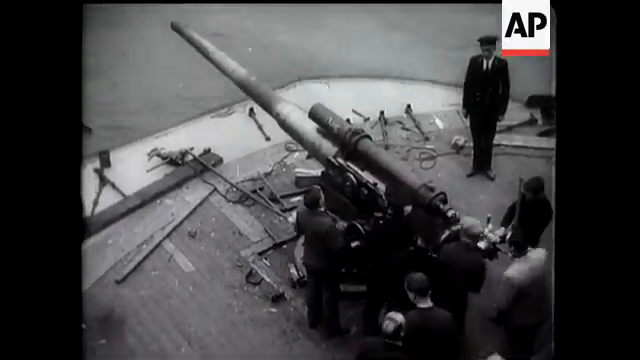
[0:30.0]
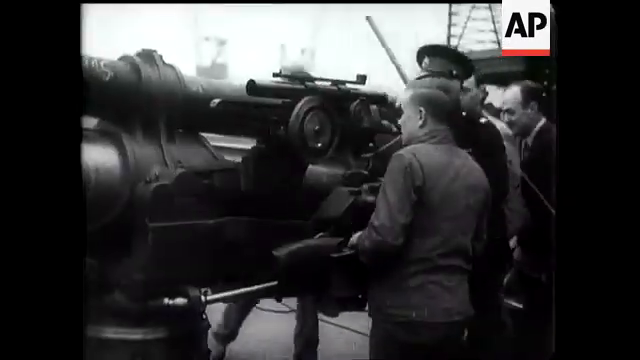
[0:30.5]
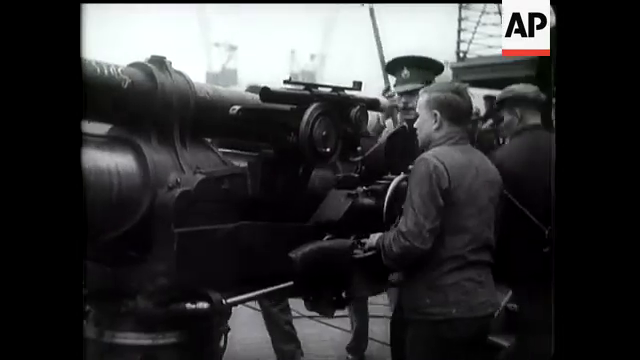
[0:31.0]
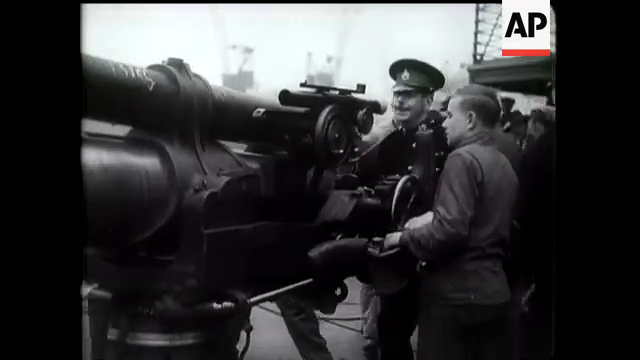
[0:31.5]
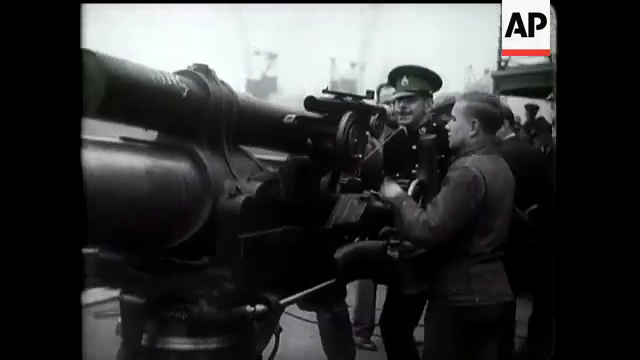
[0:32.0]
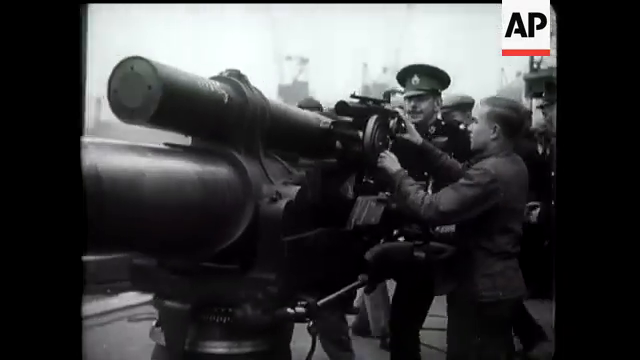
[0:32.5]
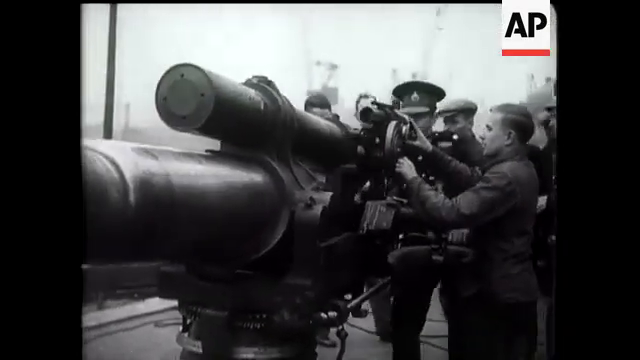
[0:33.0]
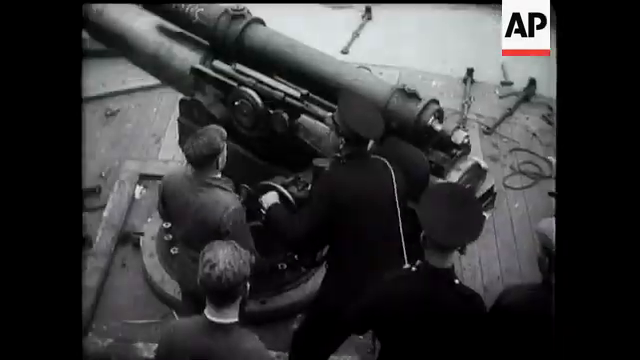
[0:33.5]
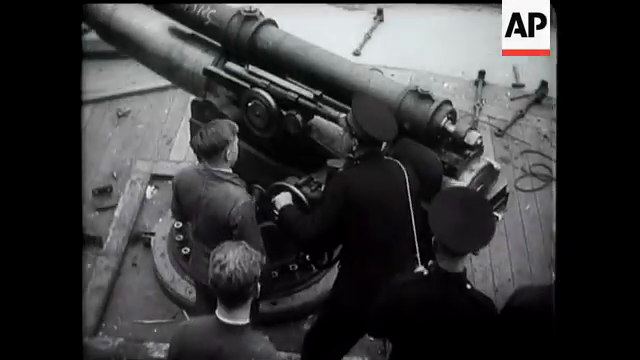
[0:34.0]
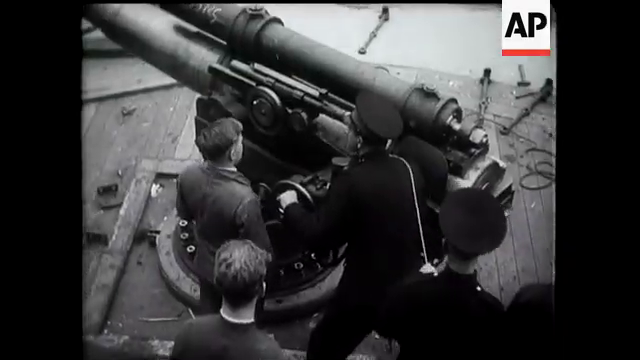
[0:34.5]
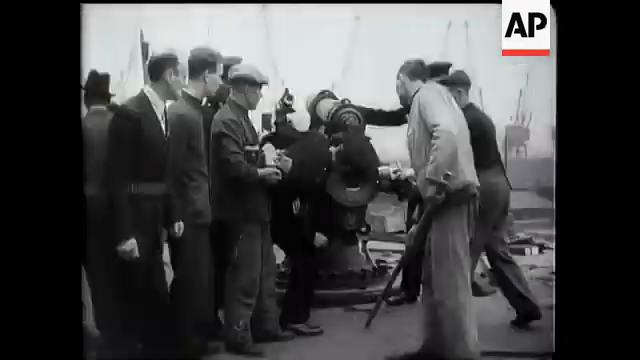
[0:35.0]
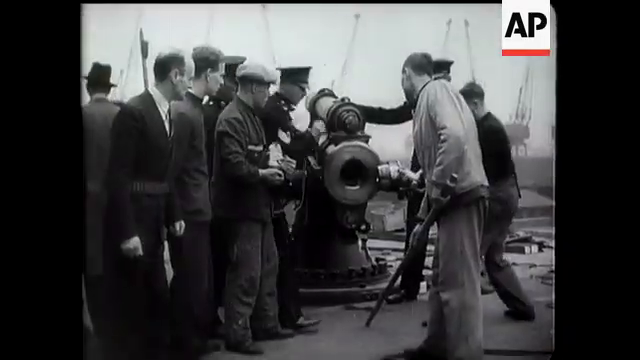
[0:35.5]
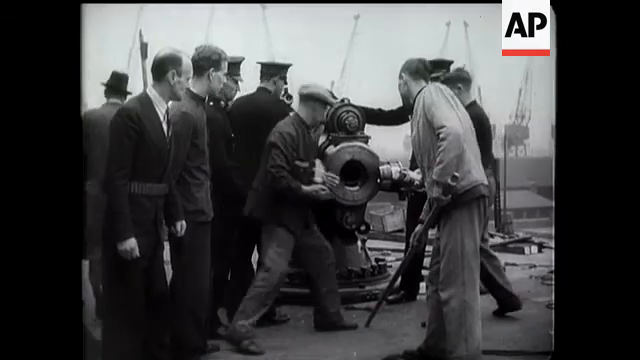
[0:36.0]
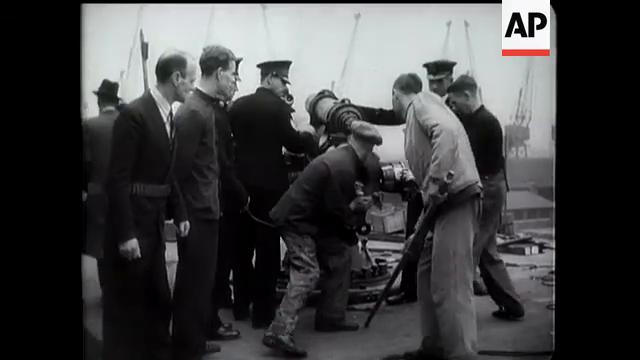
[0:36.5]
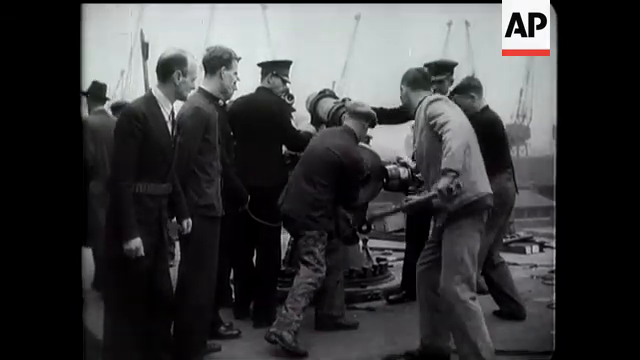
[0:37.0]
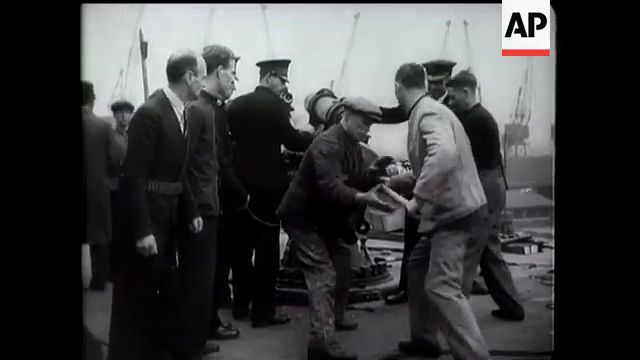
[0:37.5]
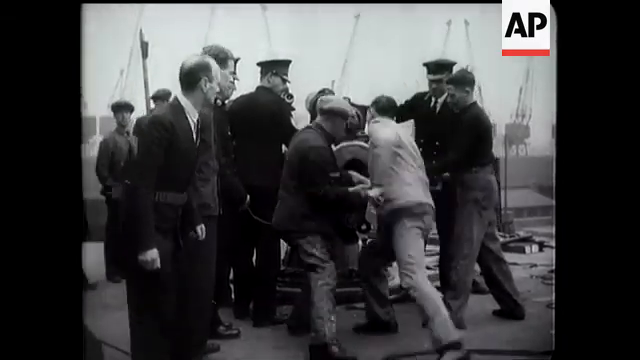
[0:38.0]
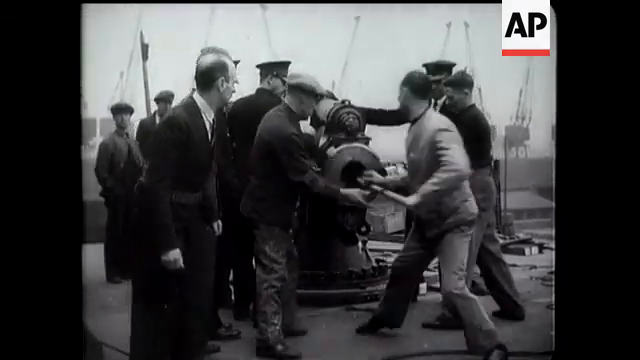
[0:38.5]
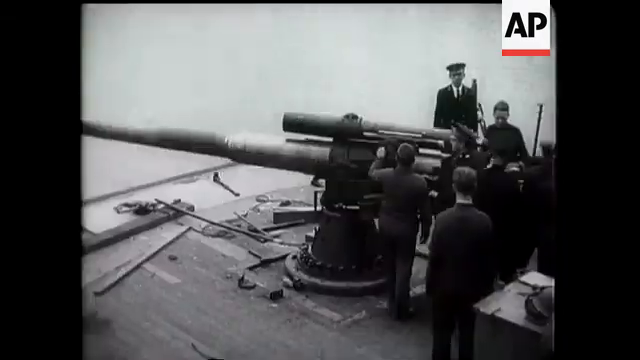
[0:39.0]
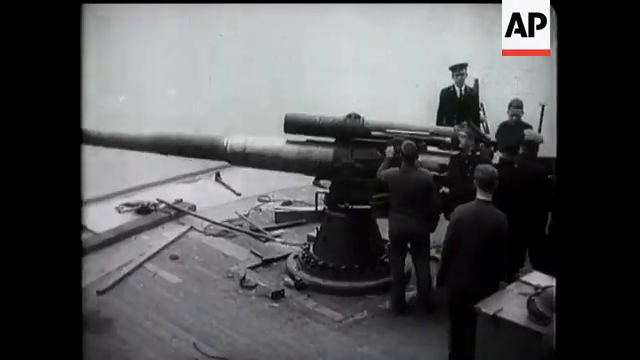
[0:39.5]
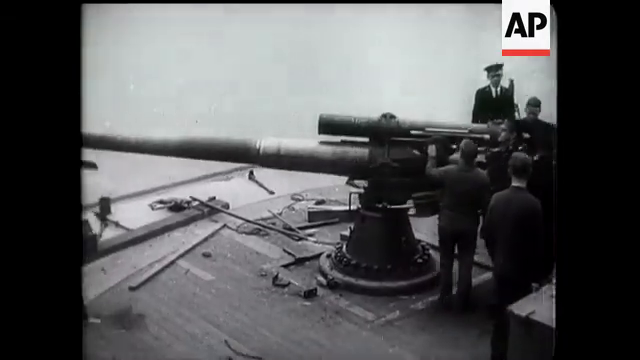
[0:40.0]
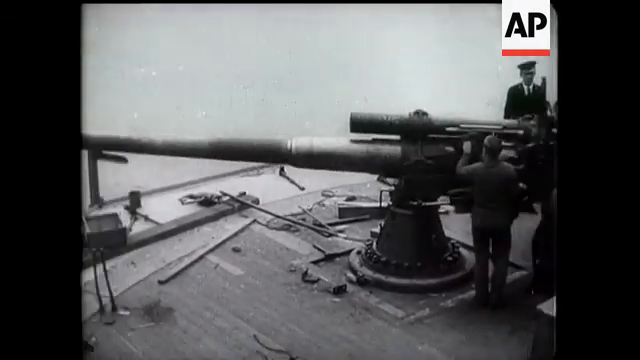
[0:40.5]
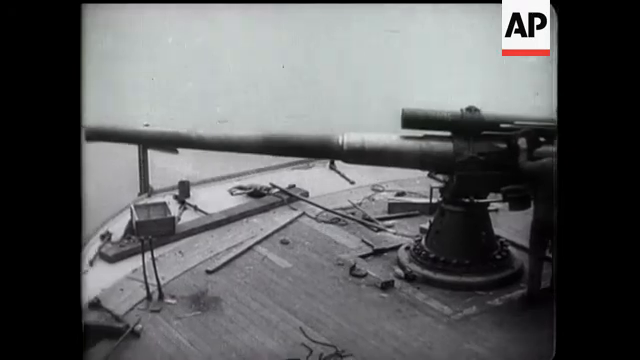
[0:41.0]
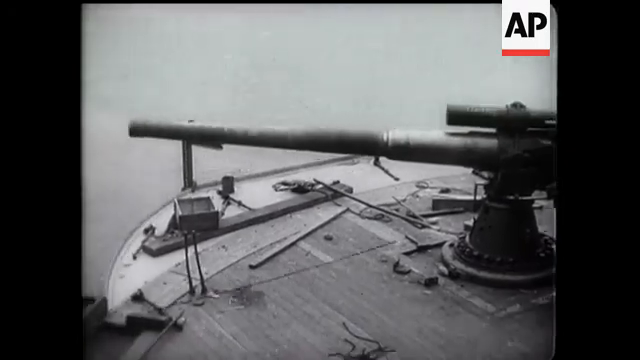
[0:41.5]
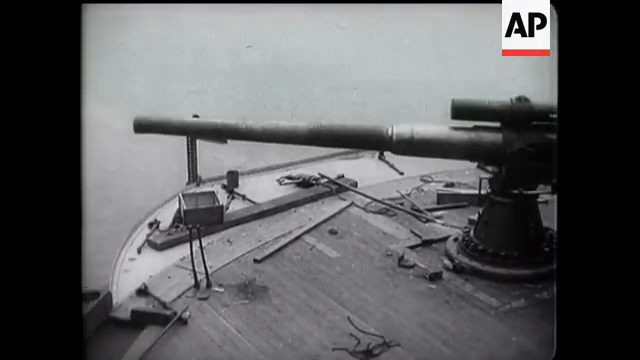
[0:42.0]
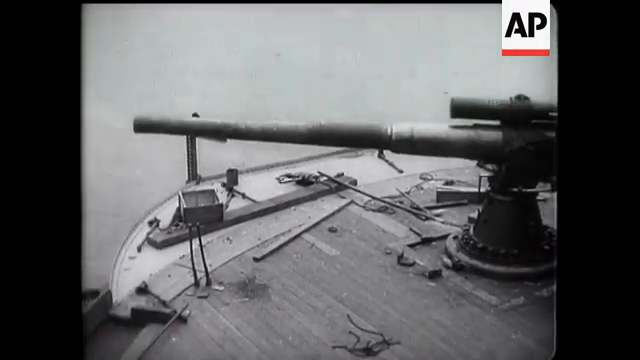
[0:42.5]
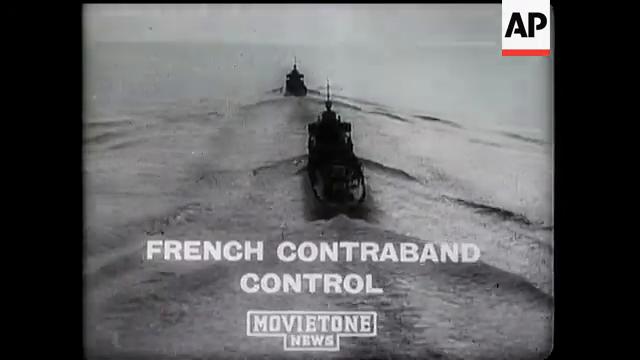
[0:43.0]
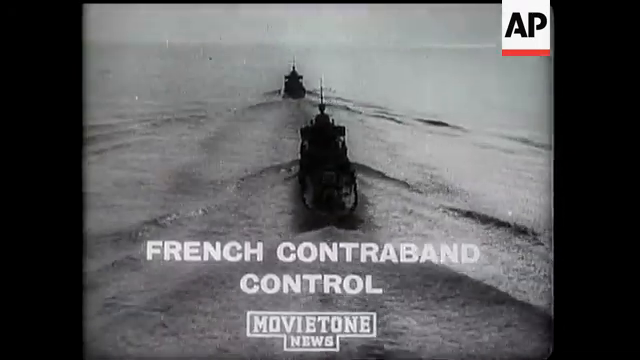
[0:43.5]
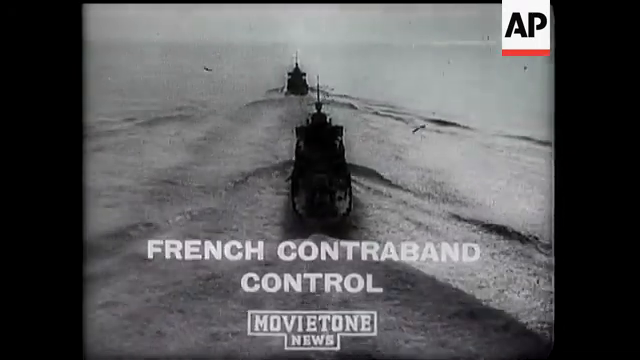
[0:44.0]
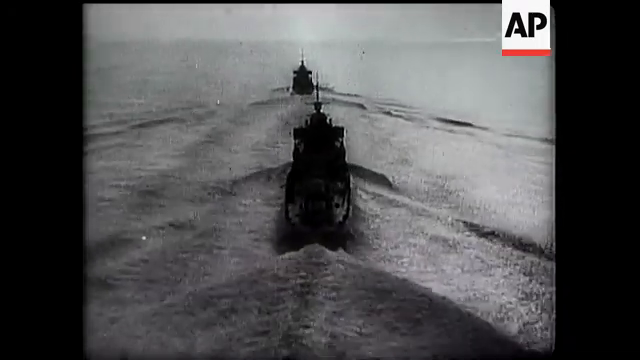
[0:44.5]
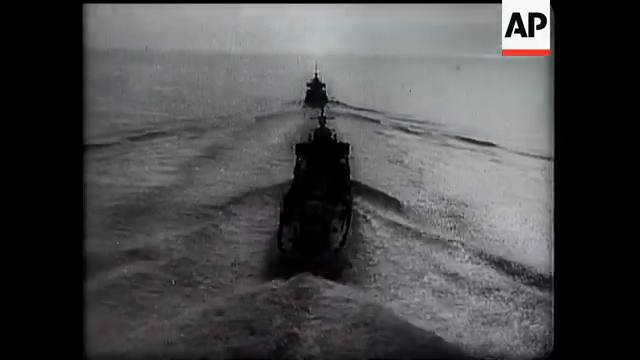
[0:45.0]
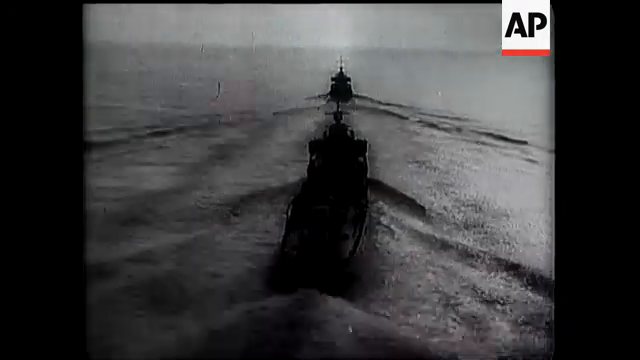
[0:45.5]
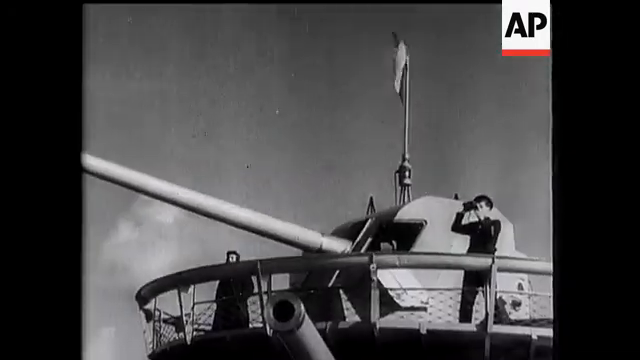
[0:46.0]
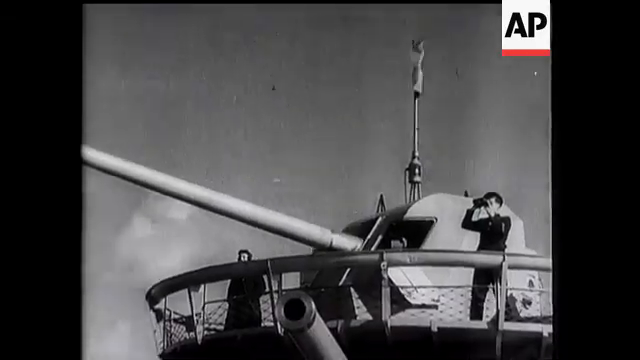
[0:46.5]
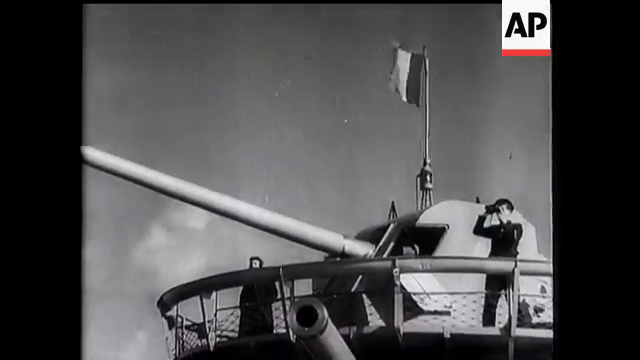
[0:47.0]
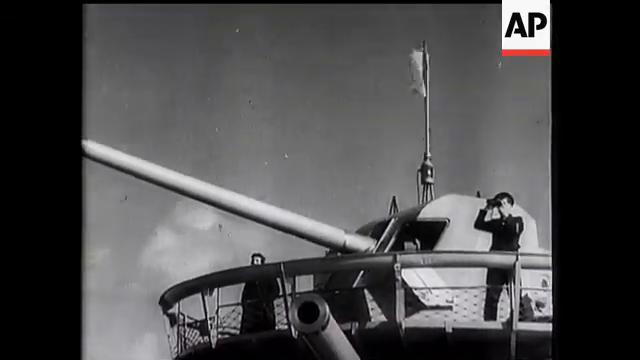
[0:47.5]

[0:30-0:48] A military officer wears a dark-colored hat, possibly black, next to another person who also appears to be in the military but wears no hat. Only about three people wear military hats. The others look like they are pushing something into it. Two dark-colored ships appear. White text at the bottom reads "French contraband", with "control" underneath, and then "movie tone" appears inside a rectangular box. A flag is visible on top of what looks like a ship, apparently with the assembled cannon on it. In the lower right-hand corner of the image, next to the cannon, a person holds binoculars and looks straight ahead, though in this shot he appears to be looking toward the left.